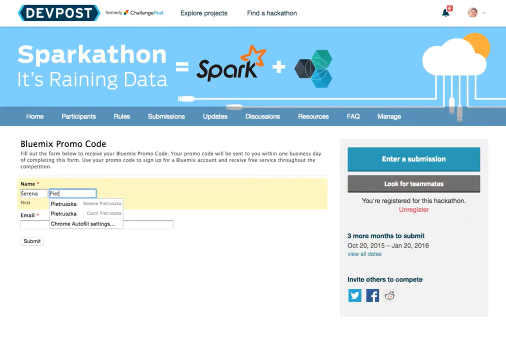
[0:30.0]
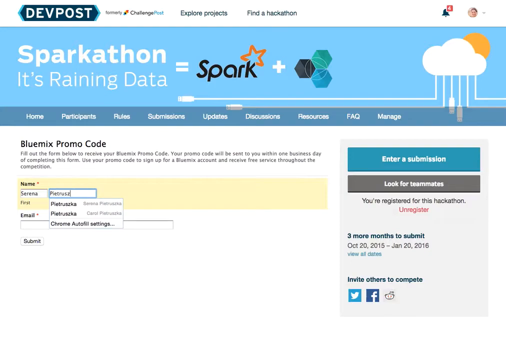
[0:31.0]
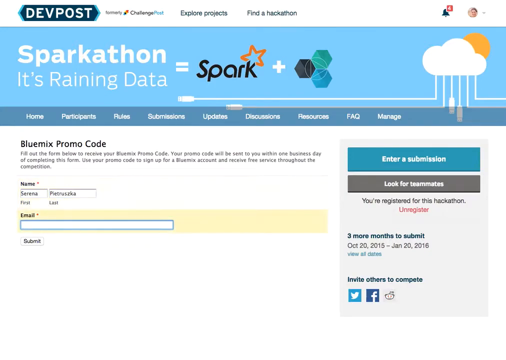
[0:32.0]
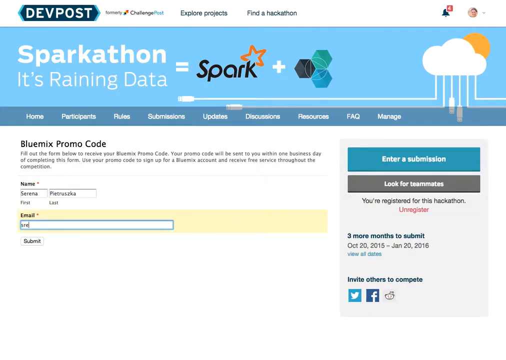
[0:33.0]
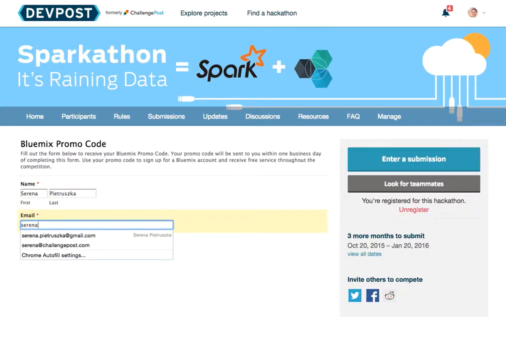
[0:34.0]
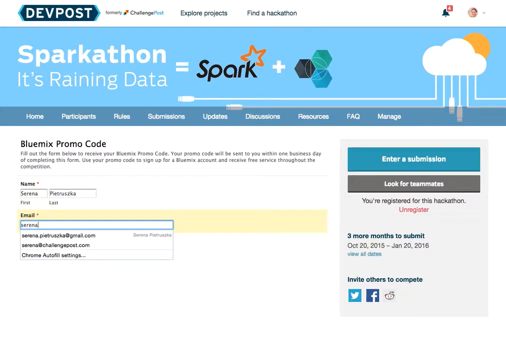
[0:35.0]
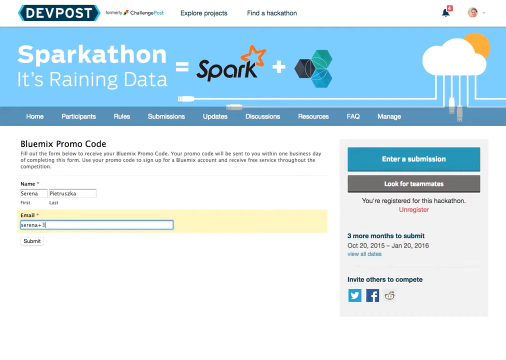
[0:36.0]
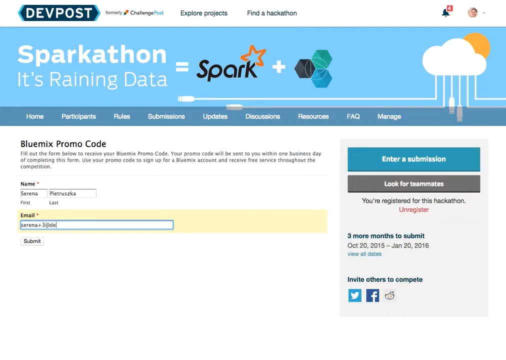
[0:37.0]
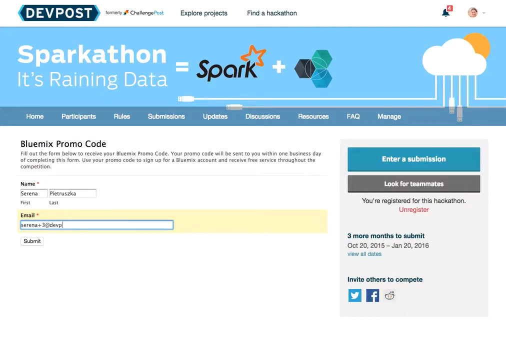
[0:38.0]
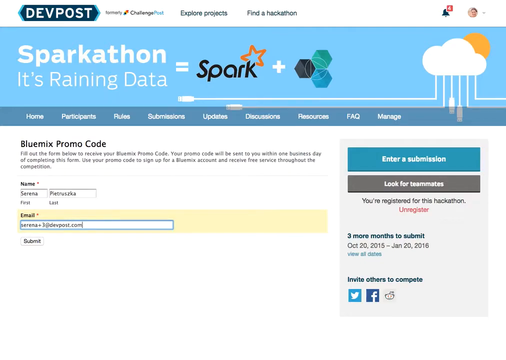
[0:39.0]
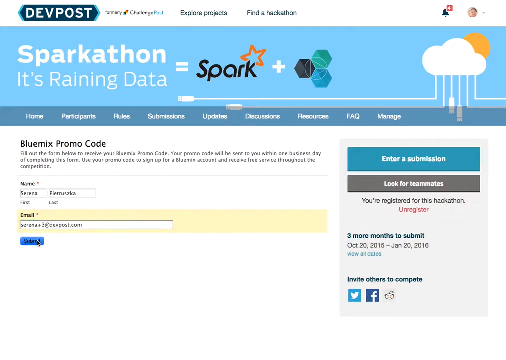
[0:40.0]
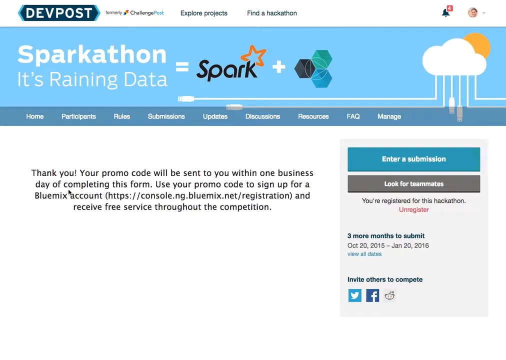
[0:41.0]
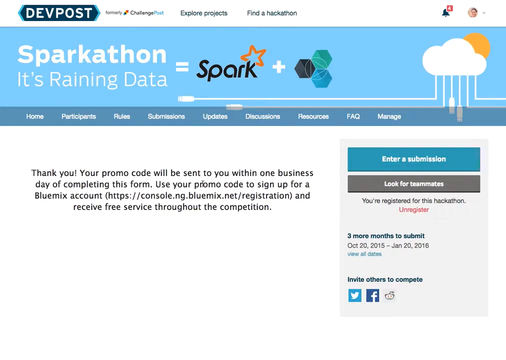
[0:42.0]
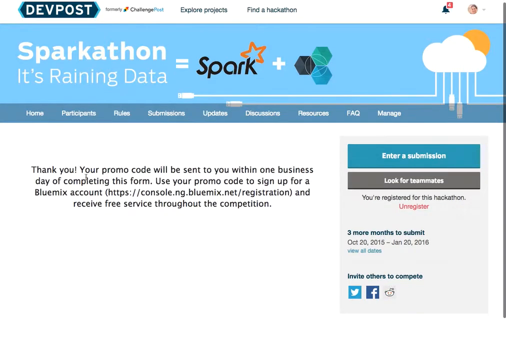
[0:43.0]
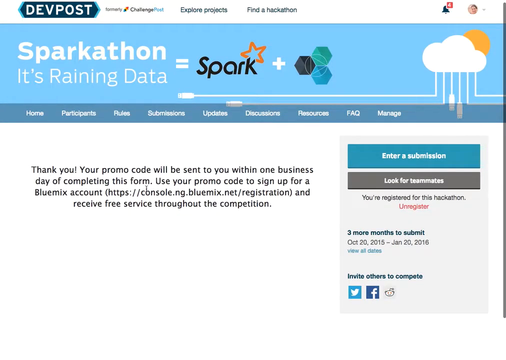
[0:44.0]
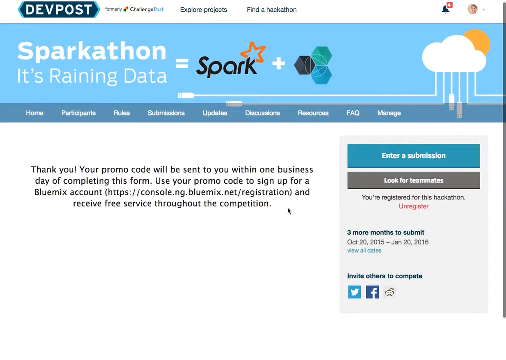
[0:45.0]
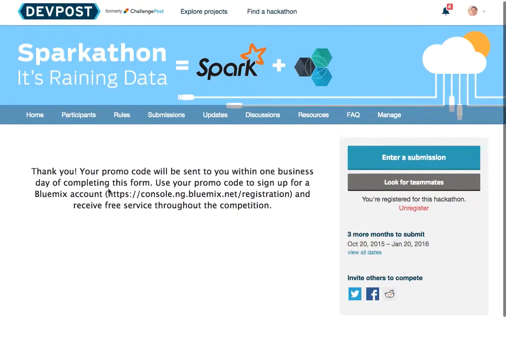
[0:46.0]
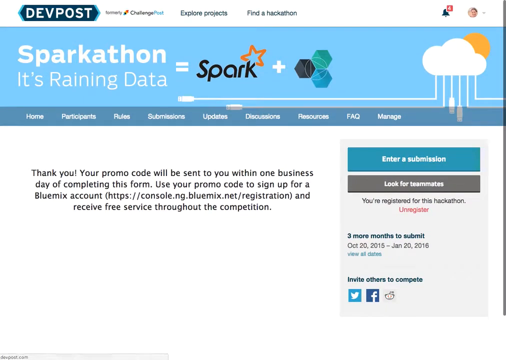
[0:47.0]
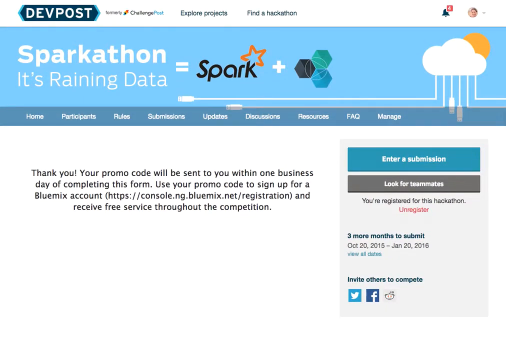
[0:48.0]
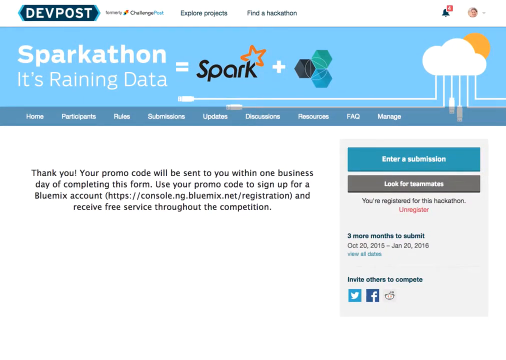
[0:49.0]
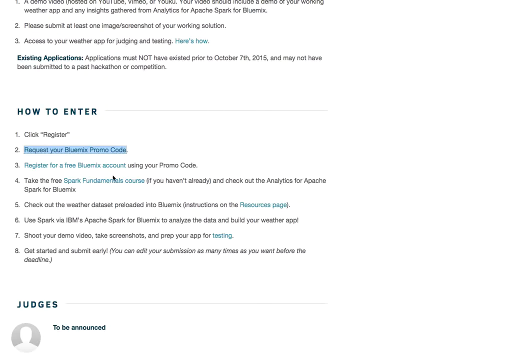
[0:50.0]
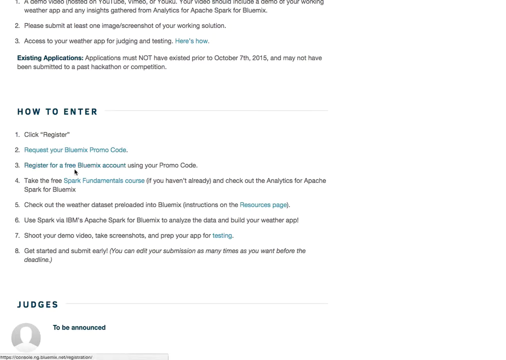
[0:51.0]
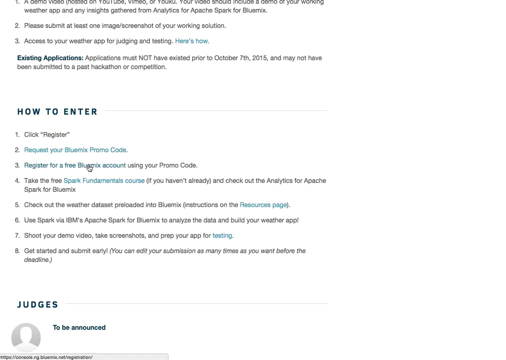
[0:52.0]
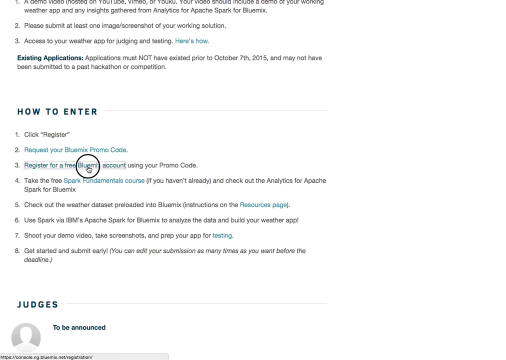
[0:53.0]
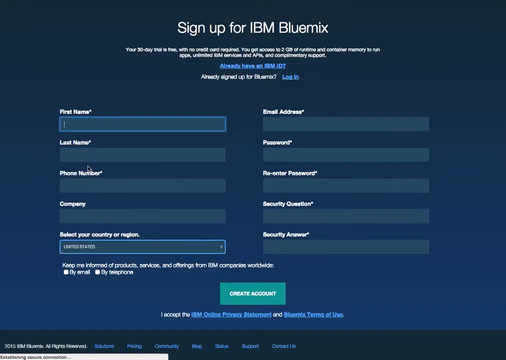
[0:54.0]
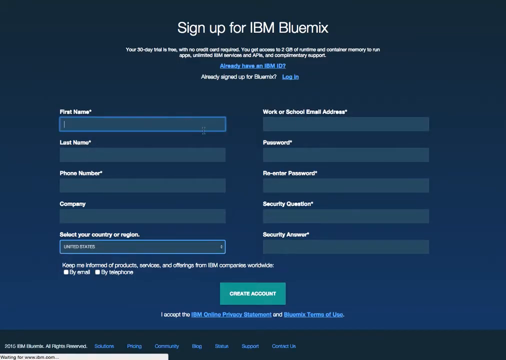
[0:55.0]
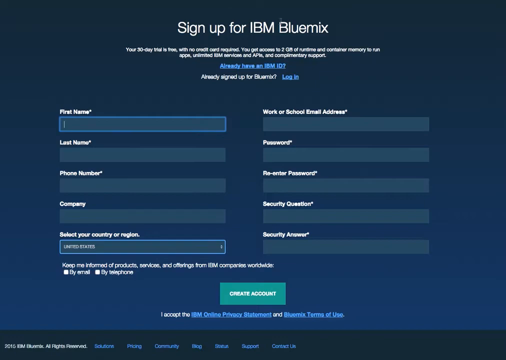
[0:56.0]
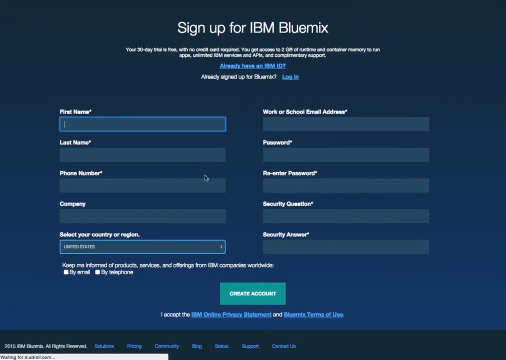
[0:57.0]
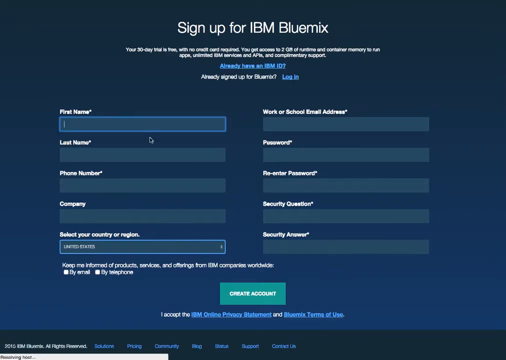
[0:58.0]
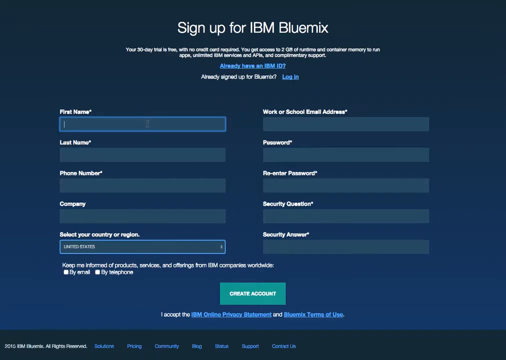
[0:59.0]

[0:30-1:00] On a website, someone types into a text input section of the page. The last name field brings up a menu, almost like an autofill box, with the text "Chrome autofill settings" in it. The website has a light blue banner at the top and a horizontal menu. The email text input box is then filled in, and an autofill box pops up as the email name is typed. The mouse pointer goes to the white submit button and presses it; the button turns blue when pressed. A message then pops up reading "thank you. Your promo code will be sent to you within one day of completing this form."